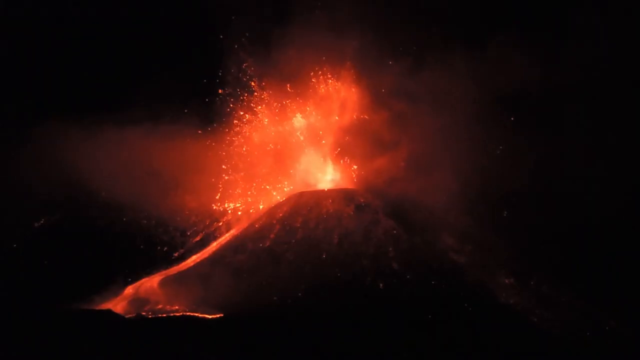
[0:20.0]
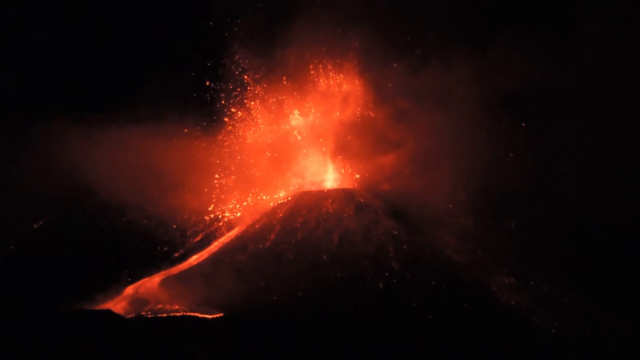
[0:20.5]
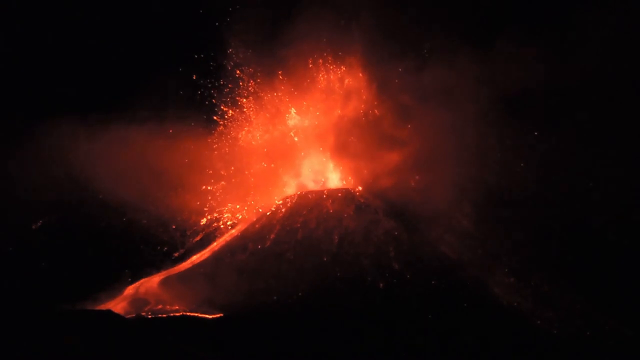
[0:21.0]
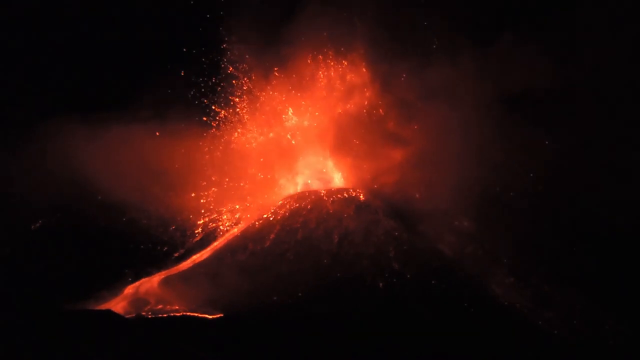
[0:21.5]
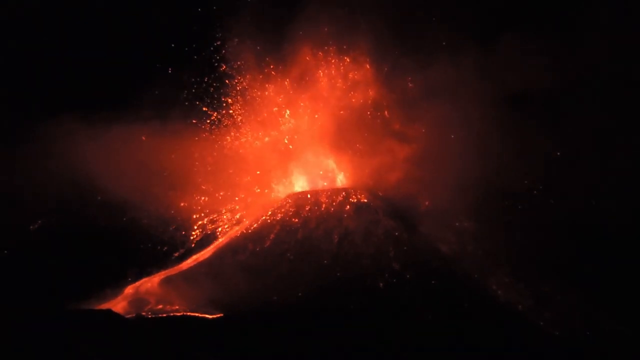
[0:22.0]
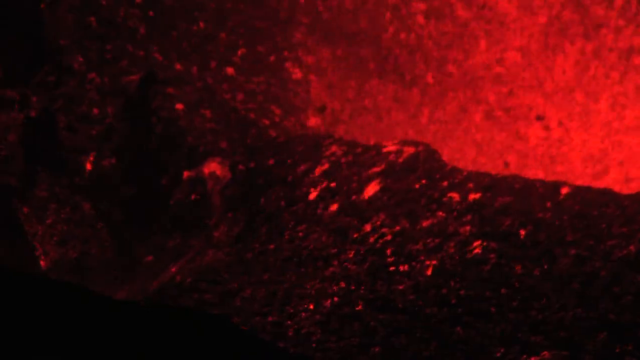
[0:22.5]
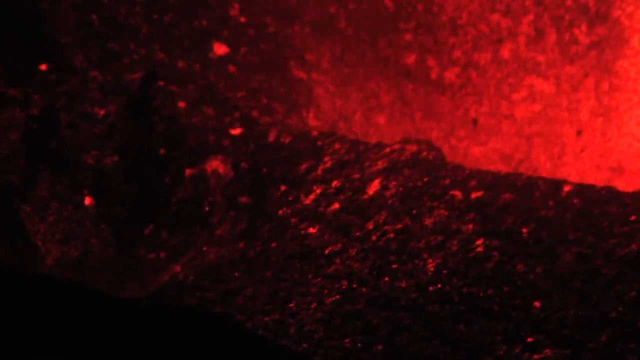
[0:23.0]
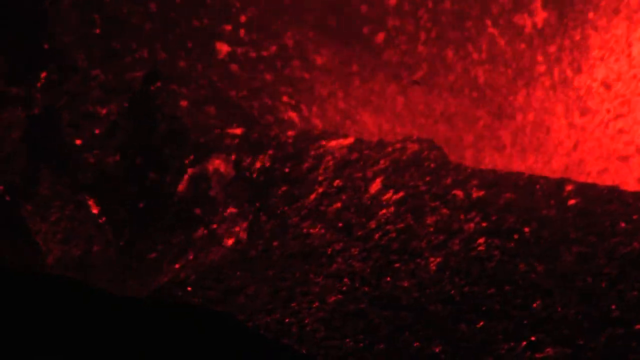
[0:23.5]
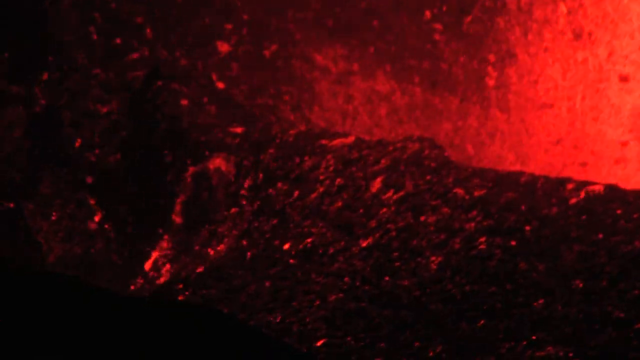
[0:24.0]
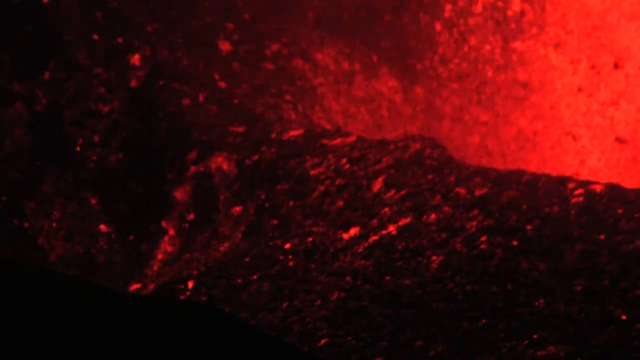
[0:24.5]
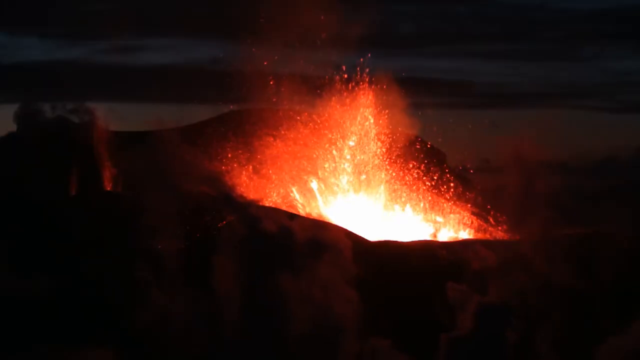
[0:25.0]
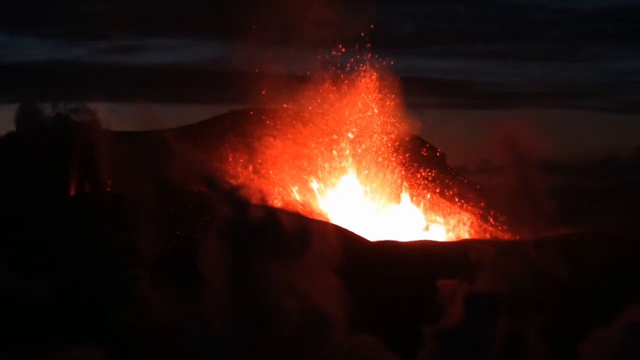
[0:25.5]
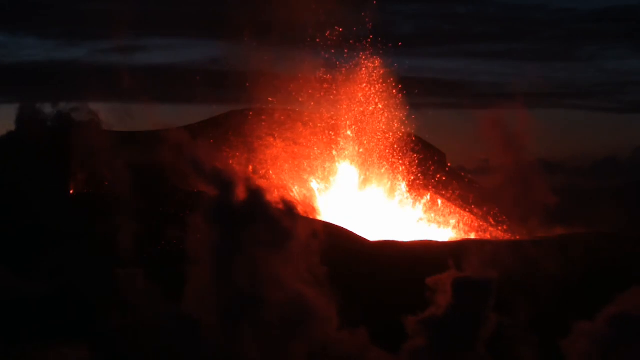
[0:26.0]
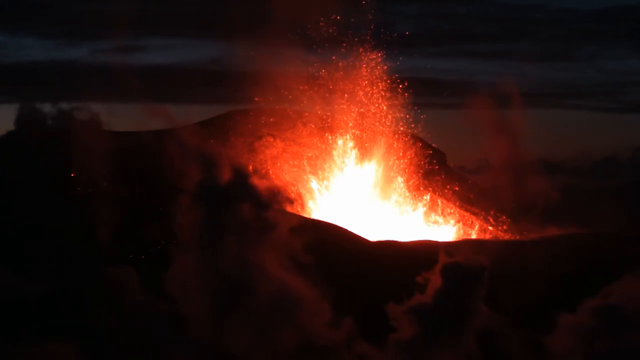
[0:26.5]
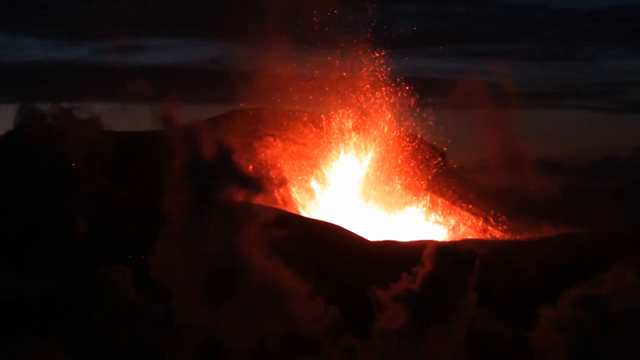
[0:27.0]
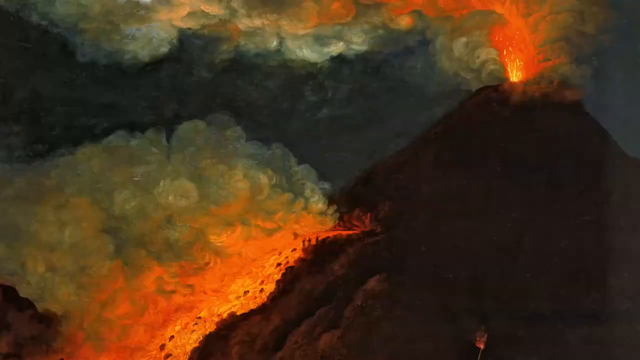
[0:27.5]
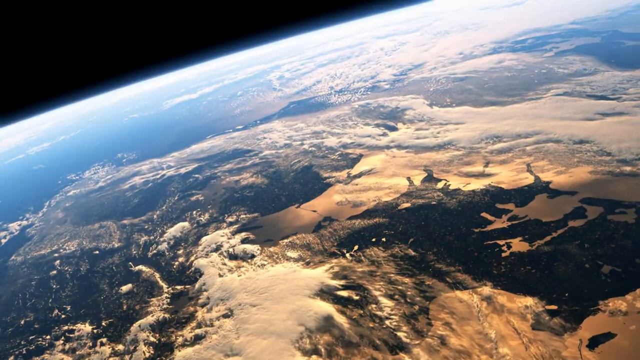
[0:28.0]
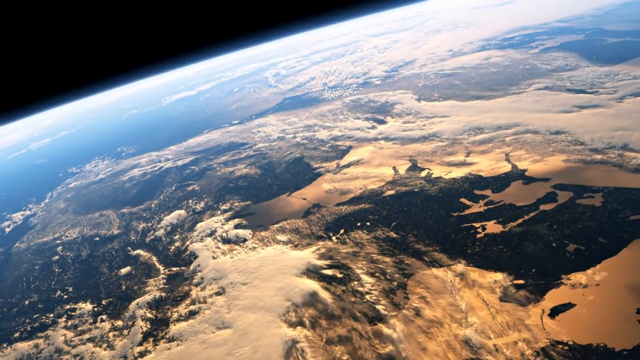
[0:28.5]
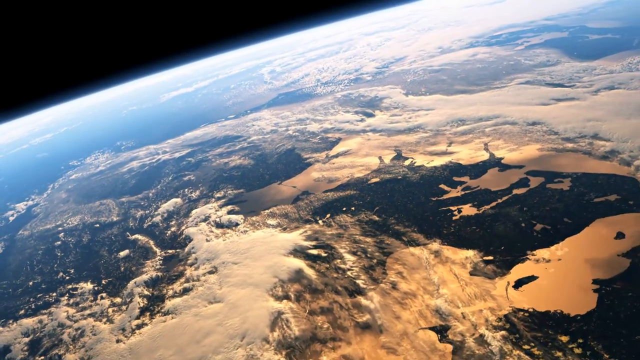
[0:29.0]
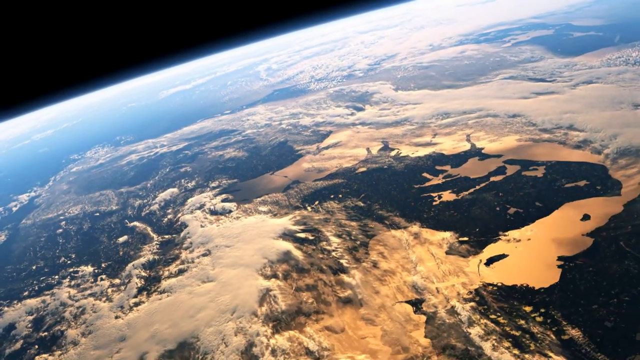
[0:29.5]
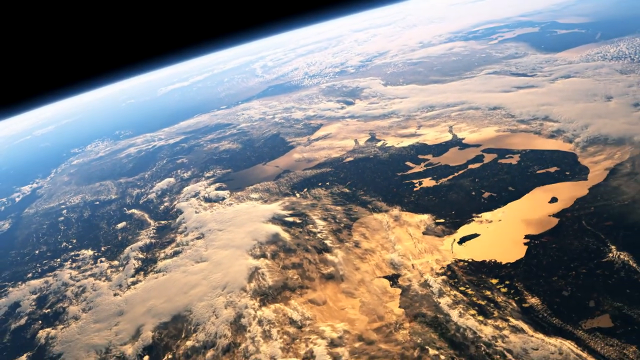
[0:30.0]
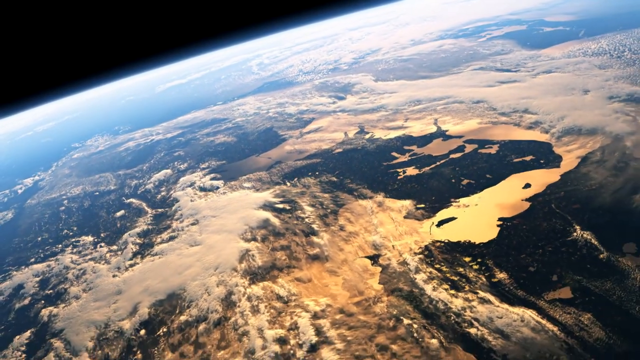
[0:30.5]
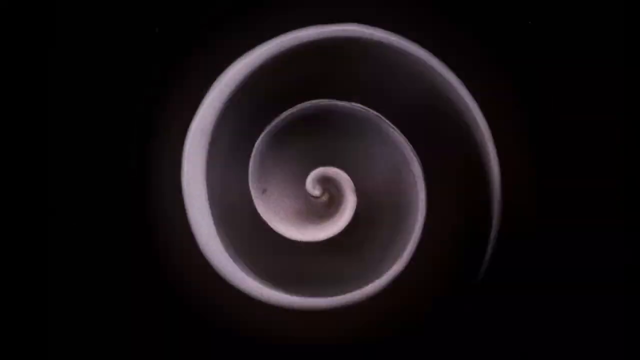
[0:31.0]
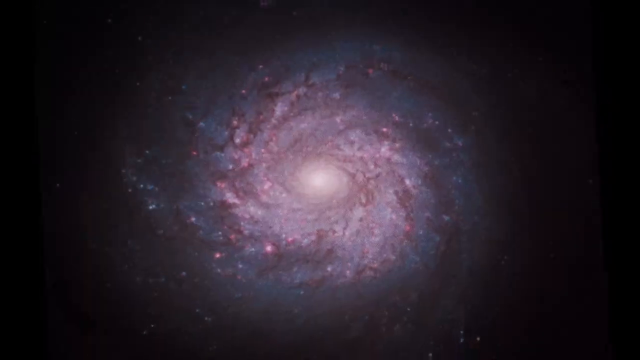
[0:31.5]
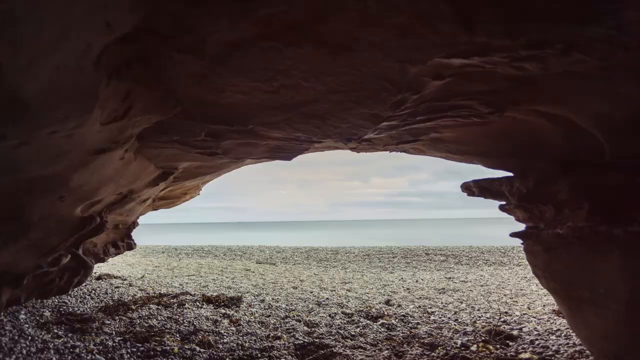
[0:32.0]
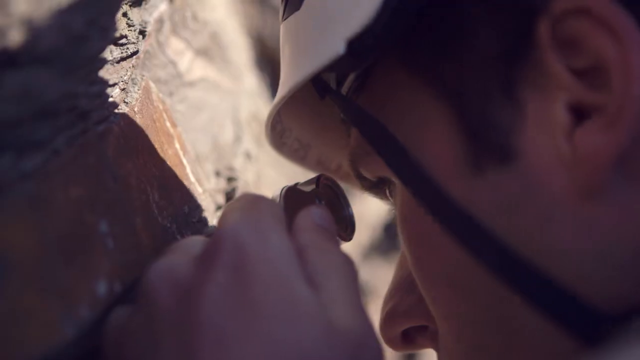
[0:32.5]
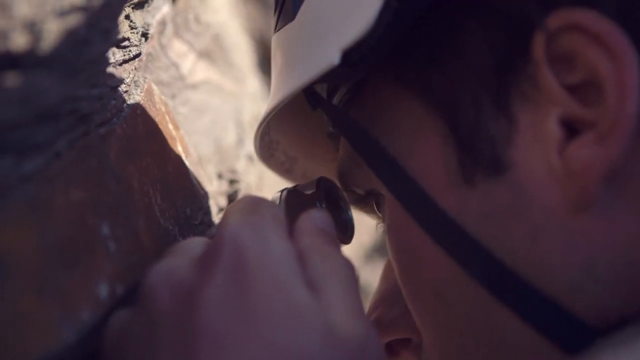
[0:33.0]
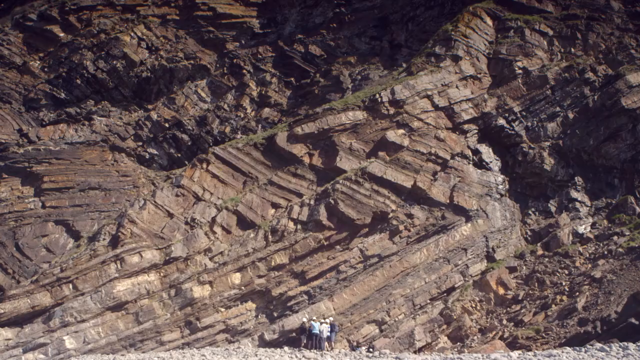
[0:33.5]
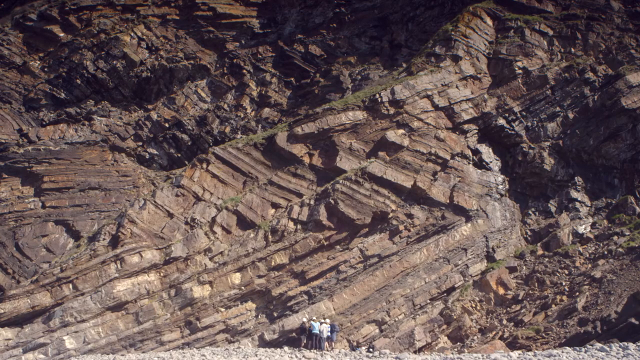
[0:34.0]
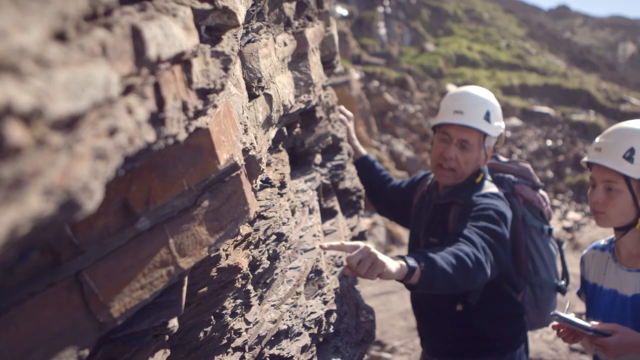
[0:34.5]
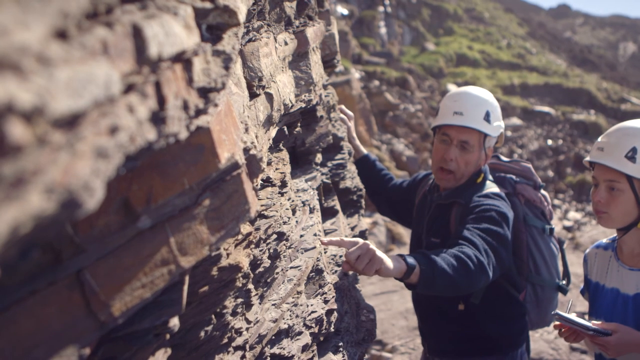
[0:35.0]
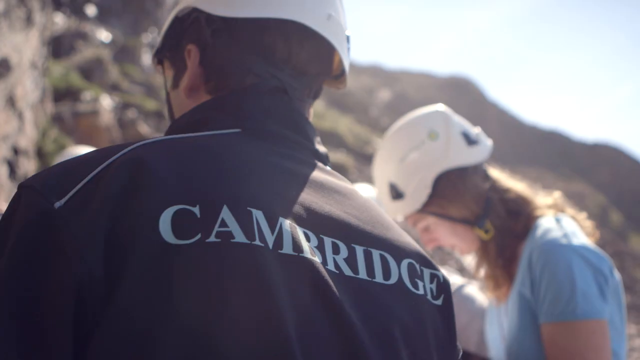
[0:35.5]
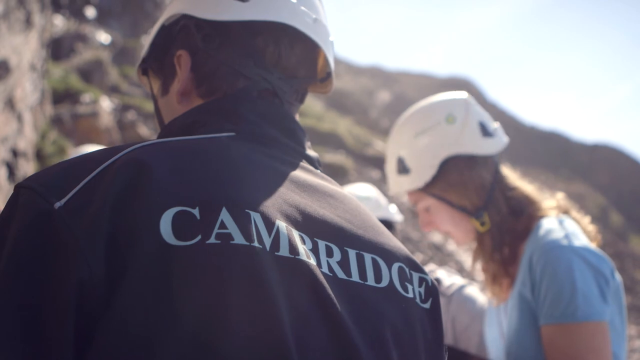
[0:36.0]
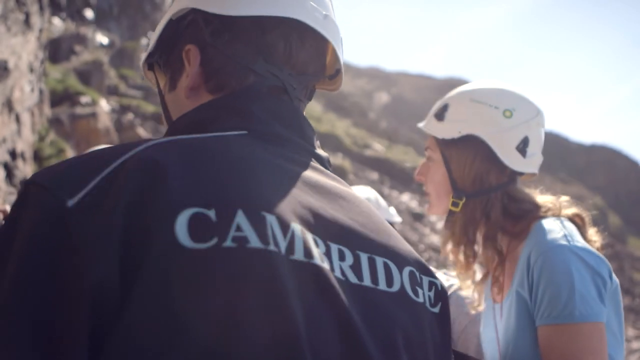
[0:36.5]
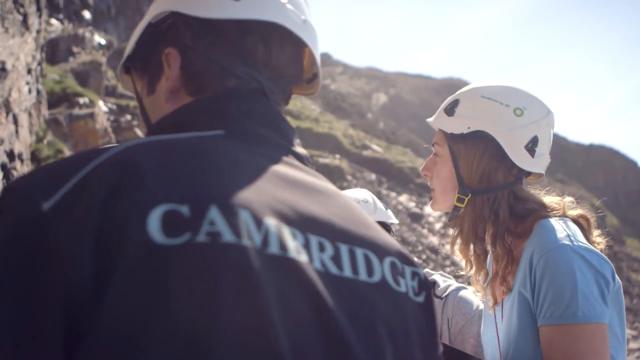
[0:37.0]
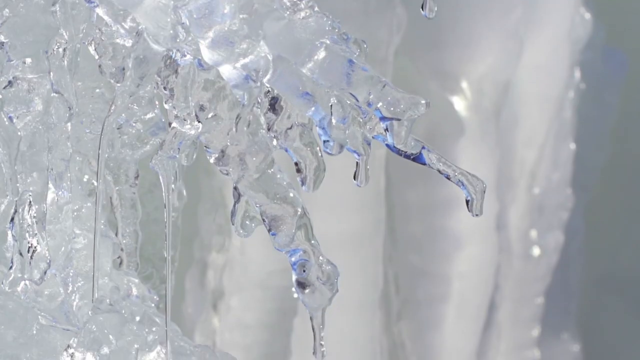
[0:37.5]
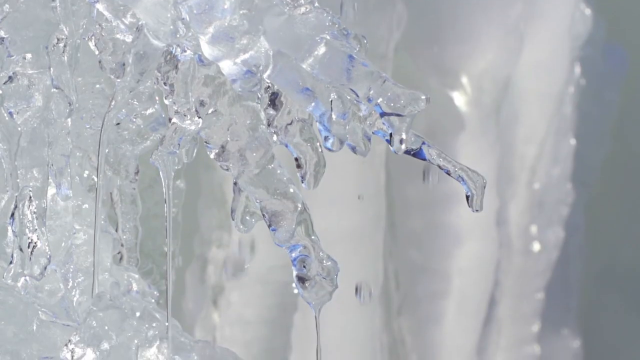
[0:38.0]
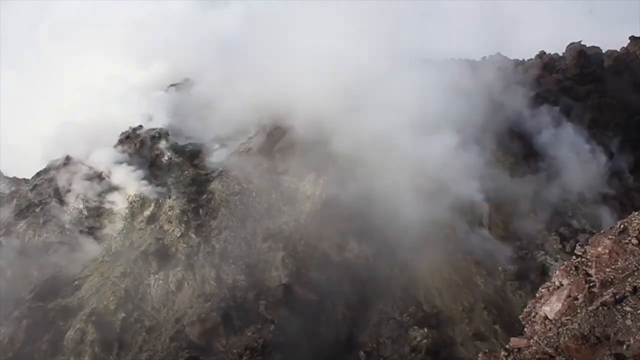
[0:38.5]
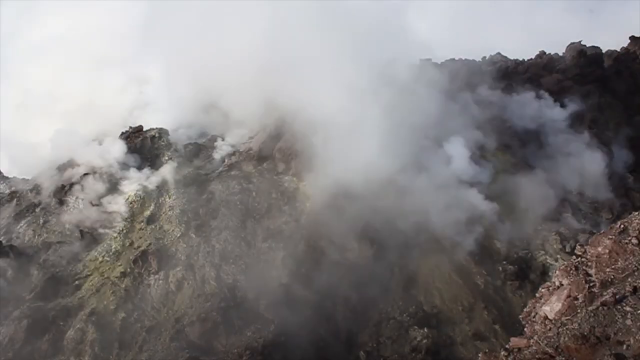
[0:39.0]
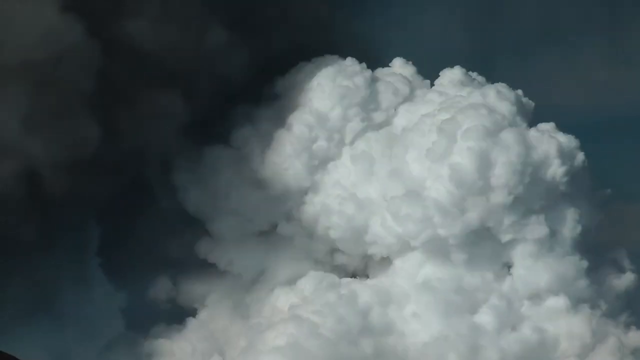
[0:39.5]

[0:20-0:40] A volcano erupts, with lava shooting out of the top and coming down the side of the mountain. A wide view of the volcano follows, then some static, then an image of the earth from up above. A whole bunch of other nature images pass very quickly, and then some kind of geologist or archaeologist looks at rocks on a mountain. Two people look at some rocks; both wear white hats, and the man has a backpack on. A woman looks at where his finger is pointing, and his finger points at the mountain. Some people at the same mountain are then seen from behind, and the man wears a jacket that says "Cambridge" on his back. The woman looks up. Then come an image of an icicle, an image of a mountain with smoke coming out of it, a whole bunch of clouds, and a nuclear reactor with lots of smoke coming out of the top, before the video goes back to the volcano again.